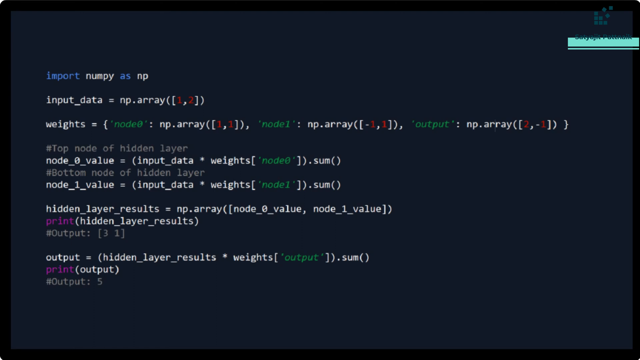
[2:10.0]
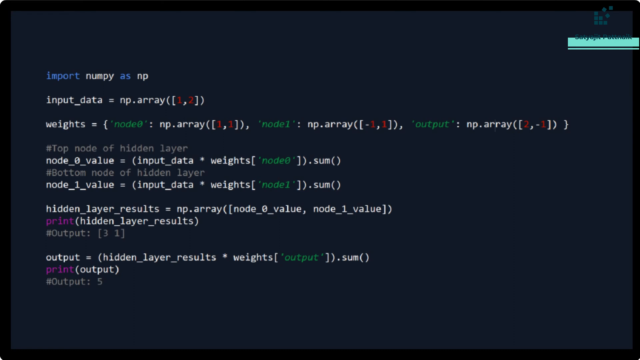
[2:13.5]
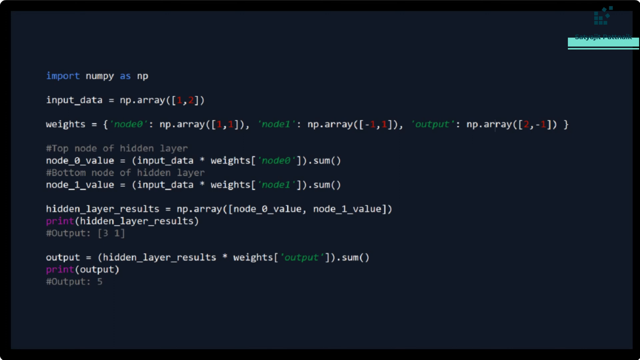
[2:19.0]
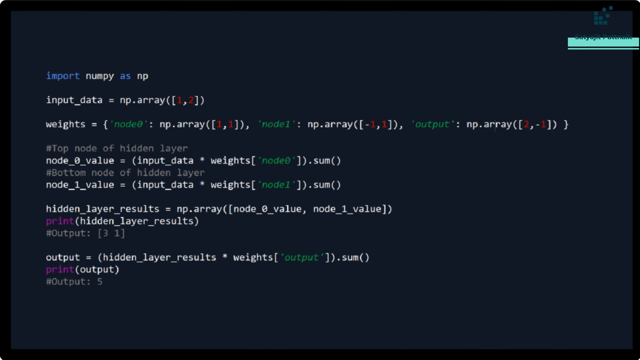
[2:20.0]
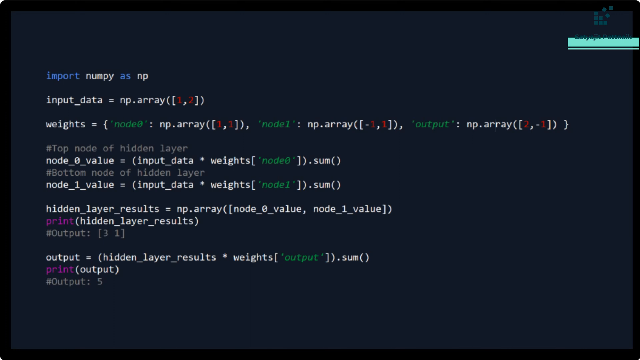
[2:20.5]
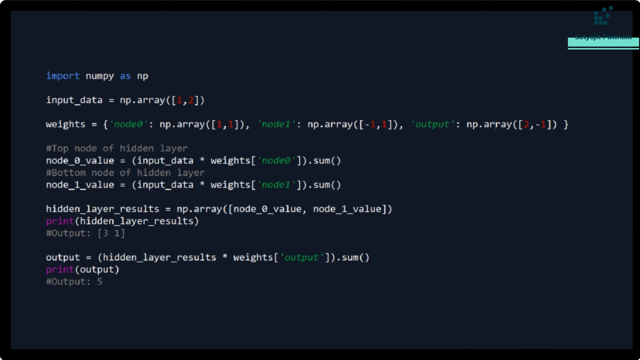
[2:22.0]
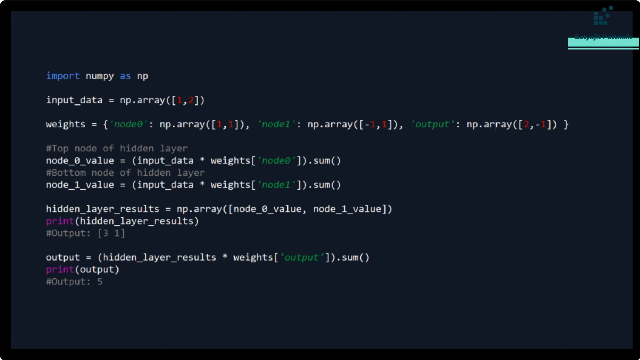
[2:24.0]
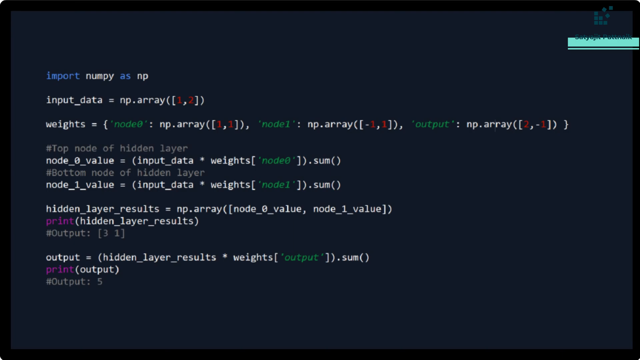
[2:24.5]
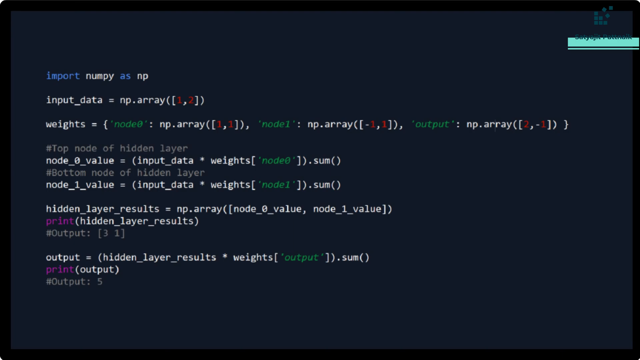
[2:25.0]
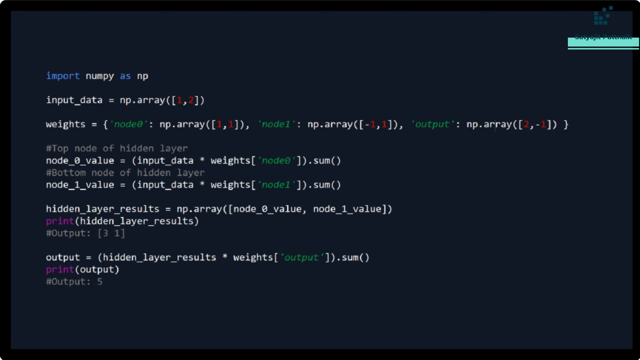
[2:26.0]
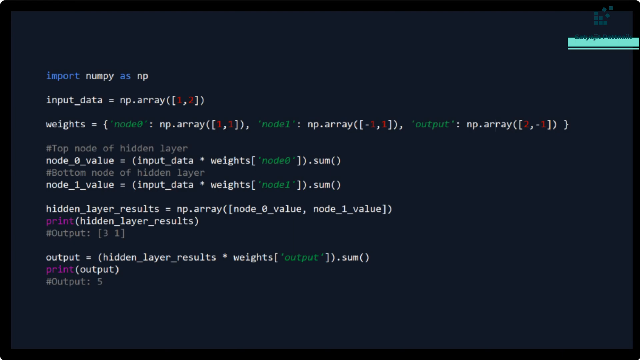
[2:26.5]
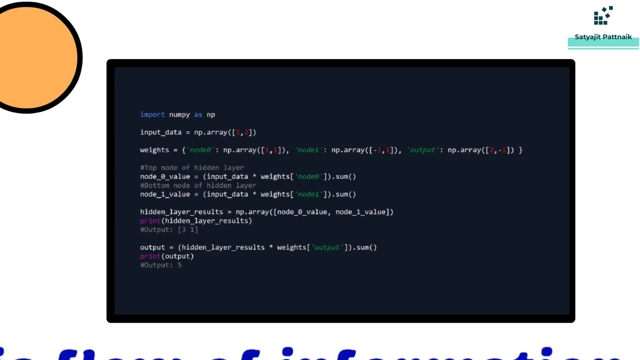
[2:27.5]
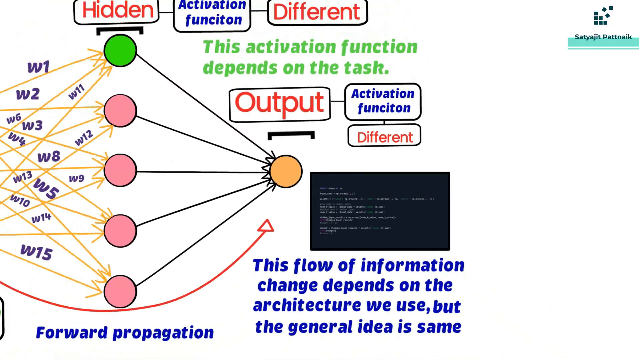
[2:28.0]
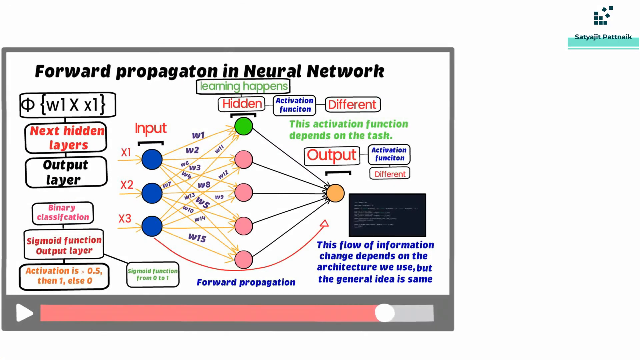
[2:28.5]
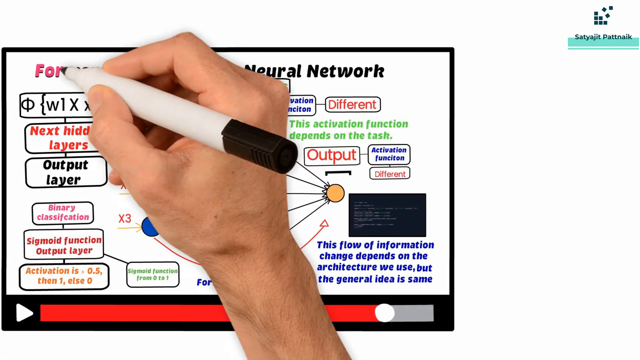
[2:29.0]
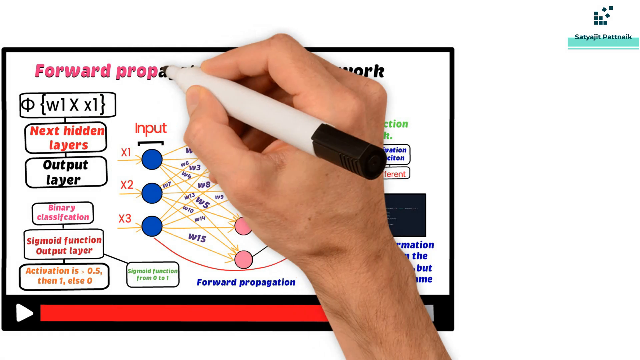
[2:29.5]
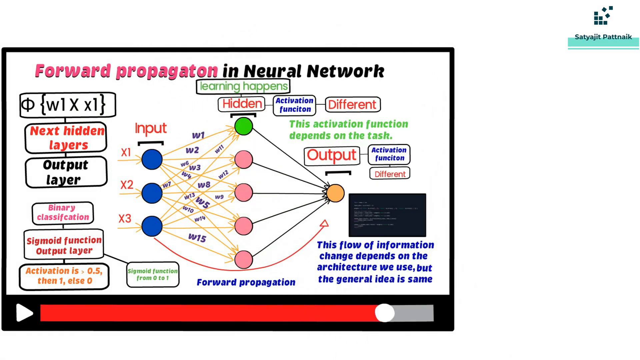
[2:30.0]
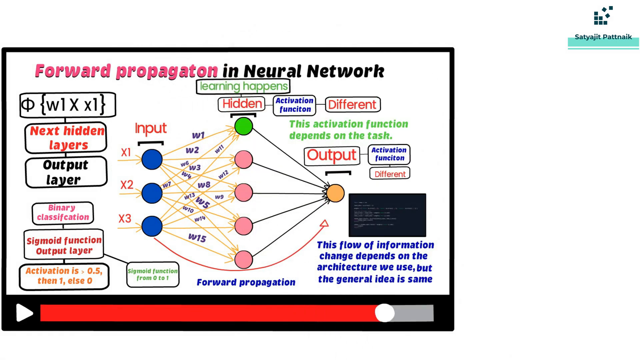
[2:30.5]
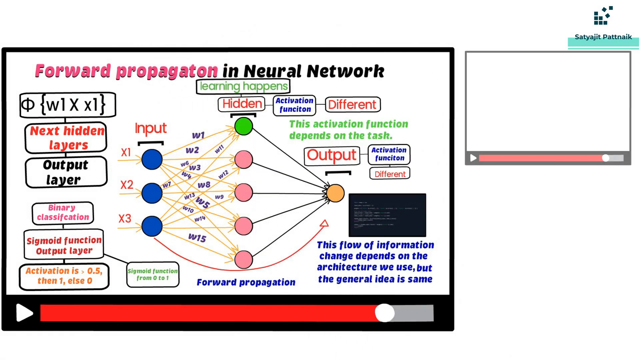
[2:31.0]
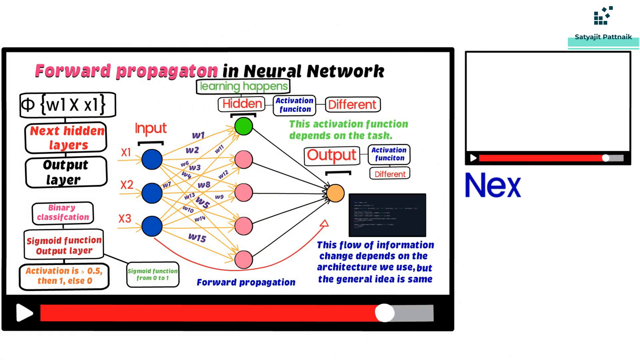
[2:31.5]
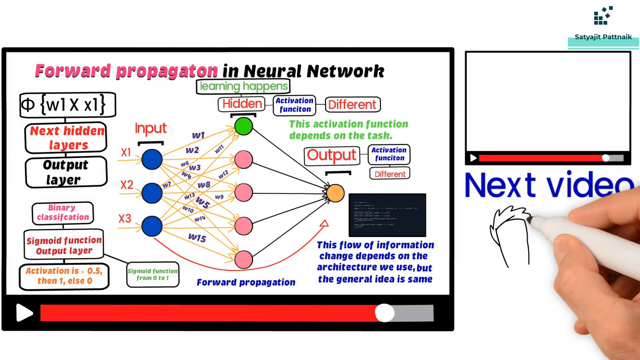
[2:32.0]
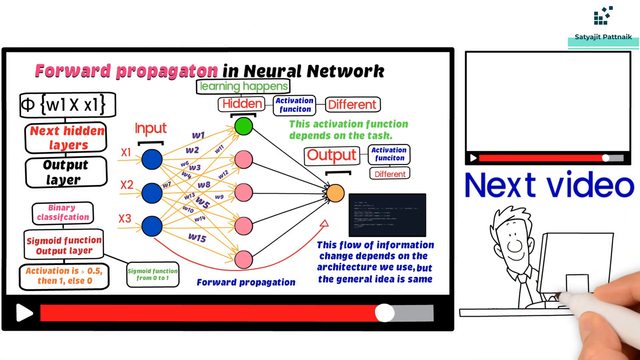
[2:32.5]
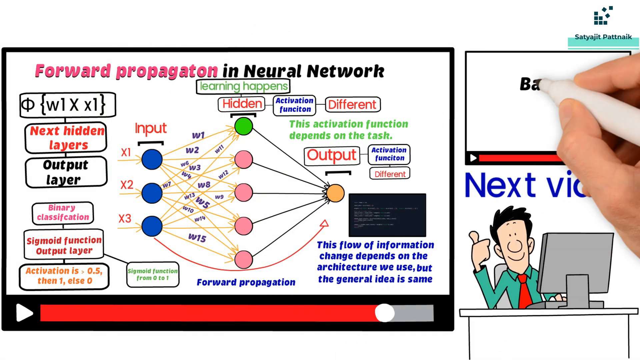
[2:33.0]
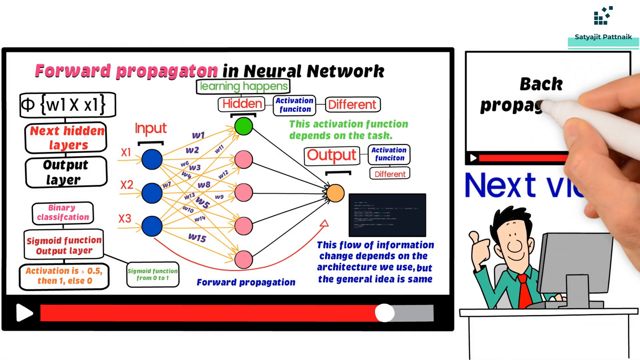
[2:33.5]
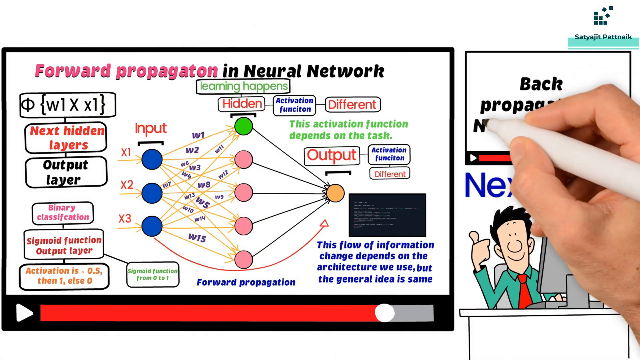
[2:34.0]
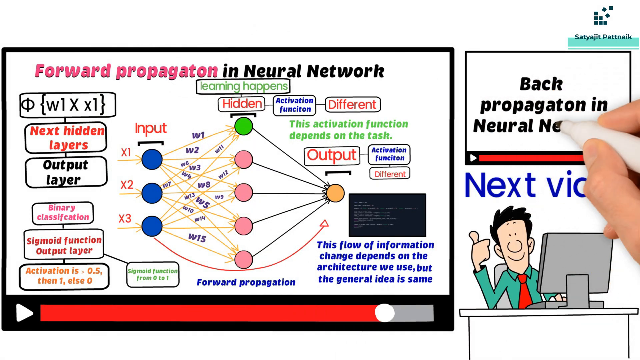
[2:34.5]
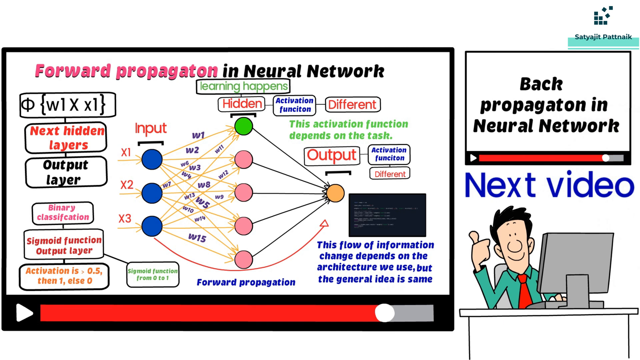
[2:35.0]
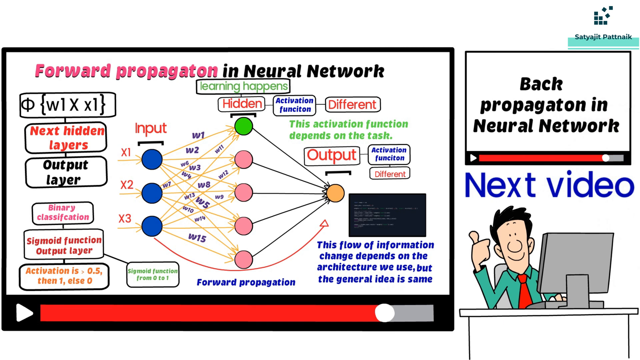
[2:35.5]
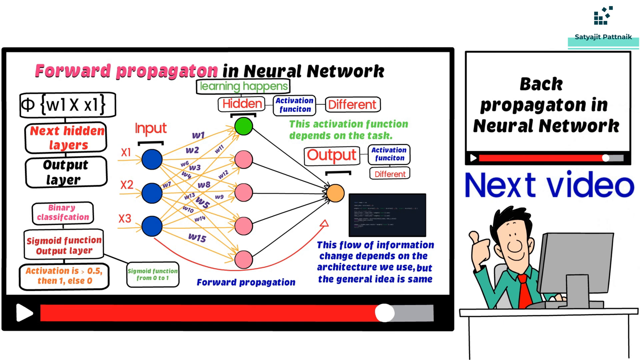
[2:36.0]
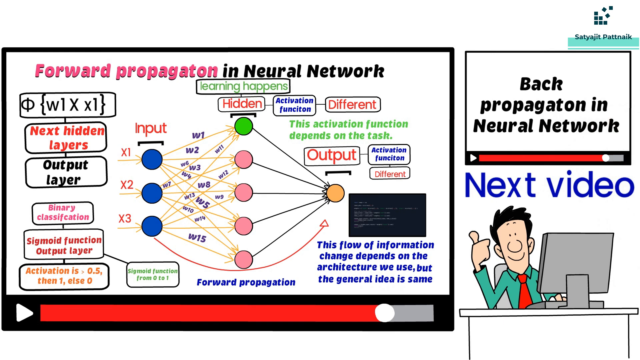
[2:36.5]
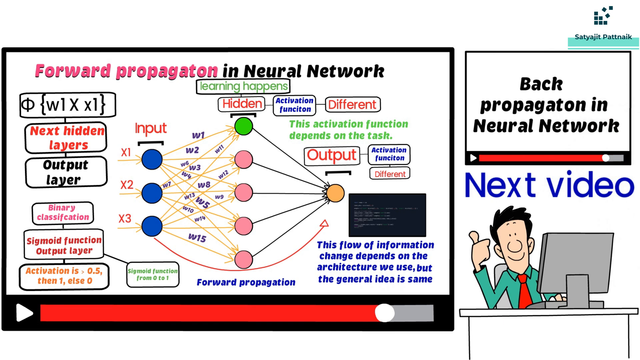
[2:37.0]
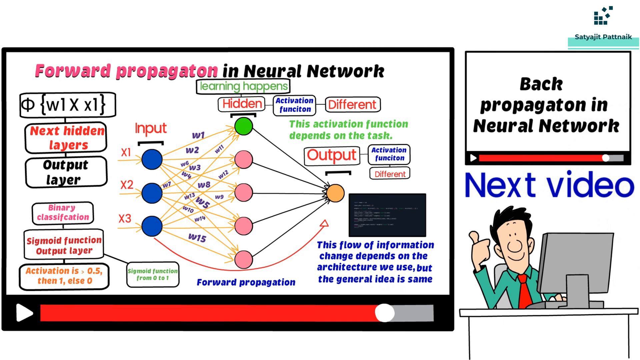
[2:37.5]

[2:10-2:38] The same programming text continues, zoomed in so it can be read. The video then zooms out, showing that this information has been added to everything from before, and then zooms in again. The heading changes from black to red. At the end, a cartoon is drawn indicating to watch the next video.